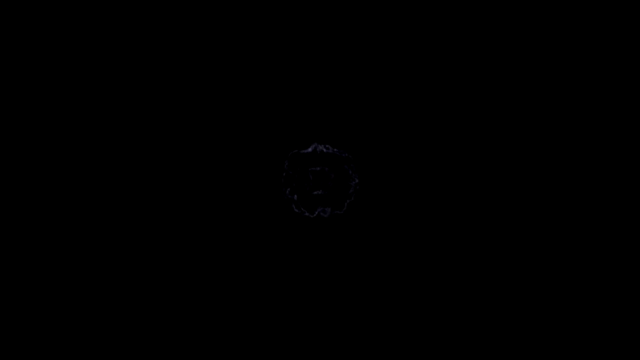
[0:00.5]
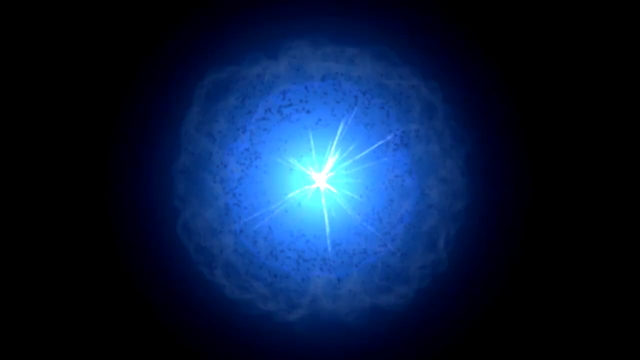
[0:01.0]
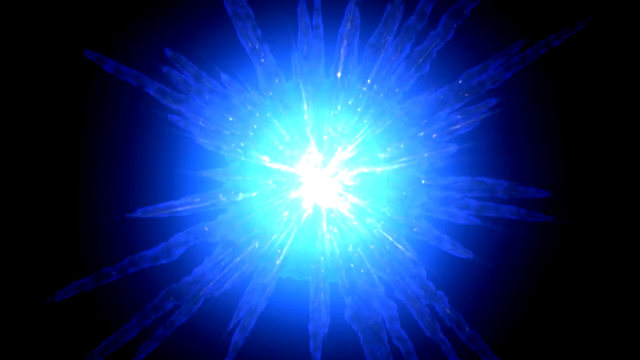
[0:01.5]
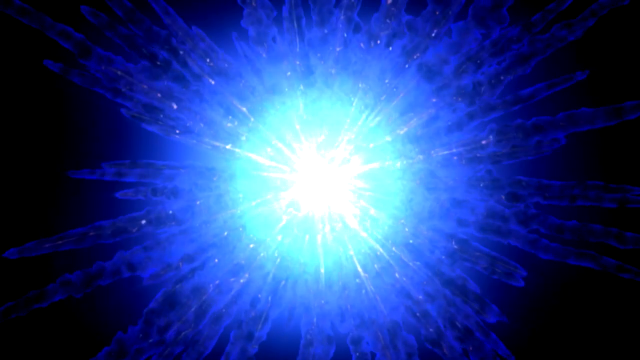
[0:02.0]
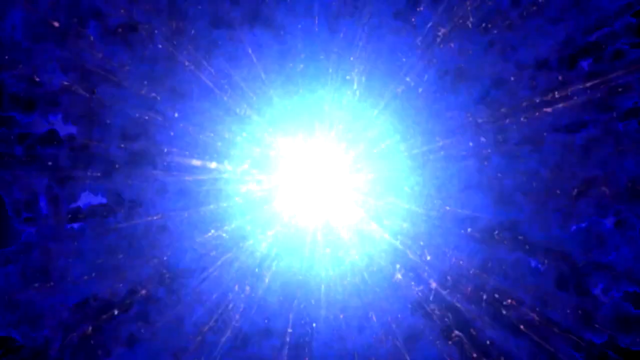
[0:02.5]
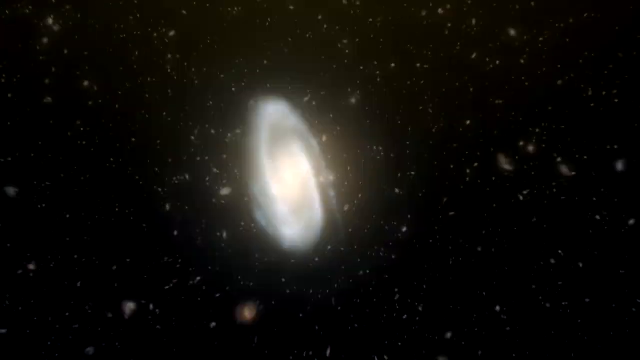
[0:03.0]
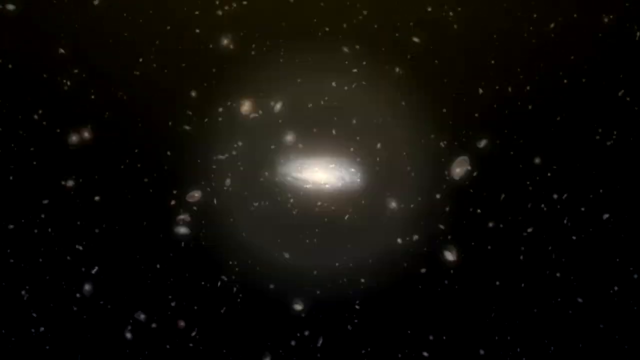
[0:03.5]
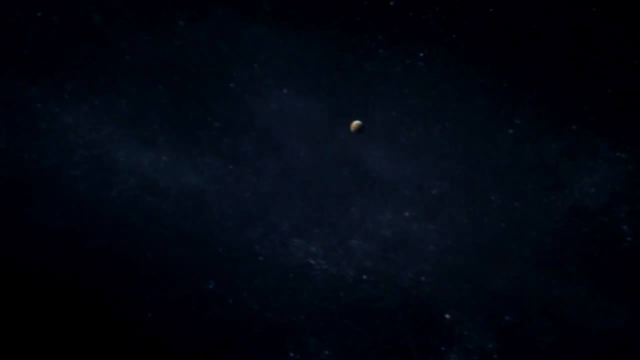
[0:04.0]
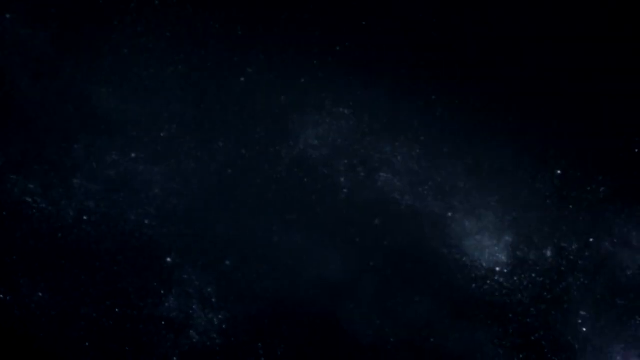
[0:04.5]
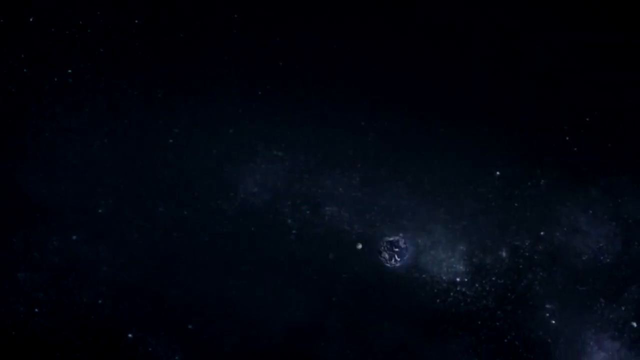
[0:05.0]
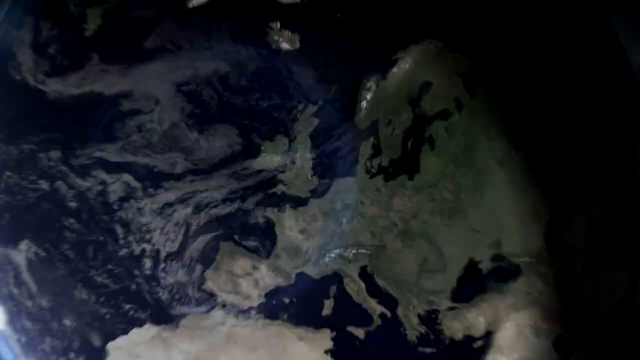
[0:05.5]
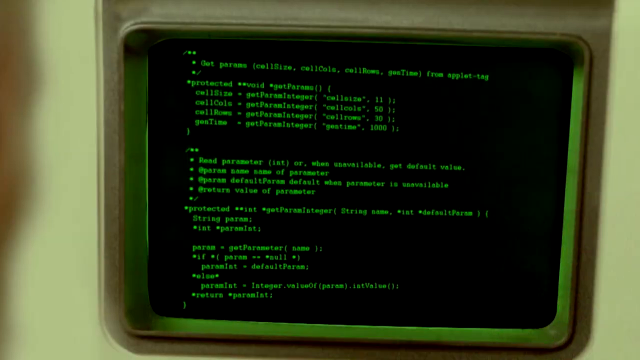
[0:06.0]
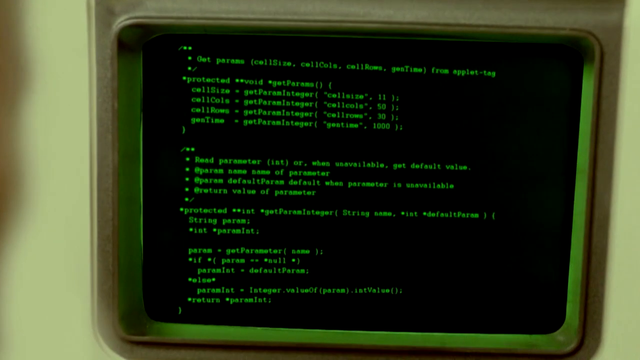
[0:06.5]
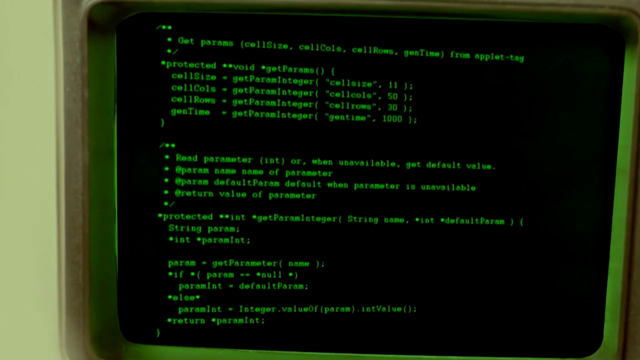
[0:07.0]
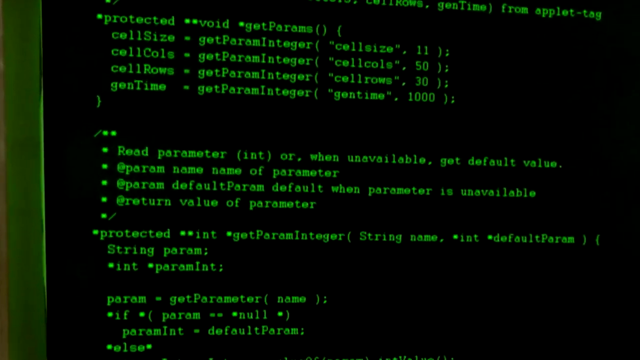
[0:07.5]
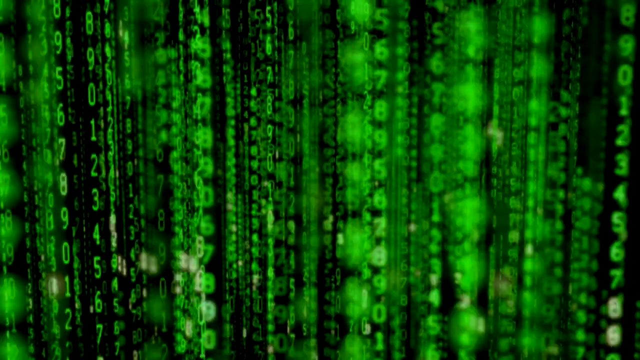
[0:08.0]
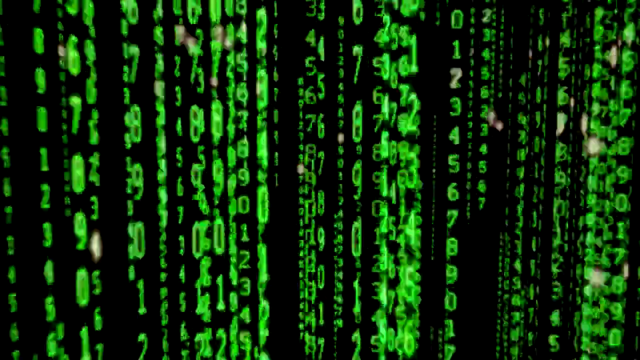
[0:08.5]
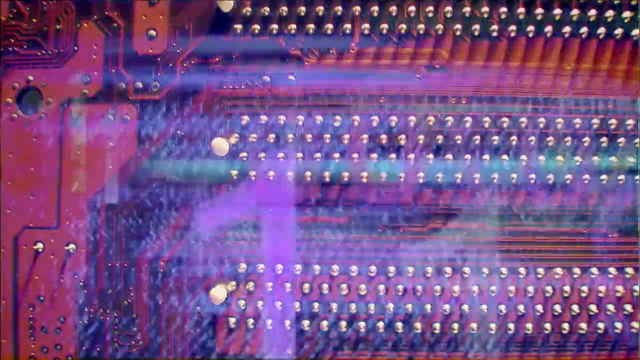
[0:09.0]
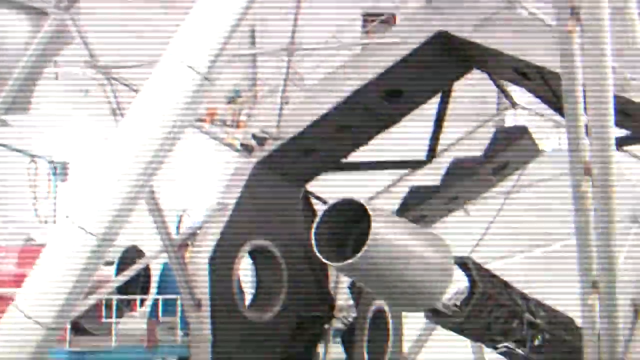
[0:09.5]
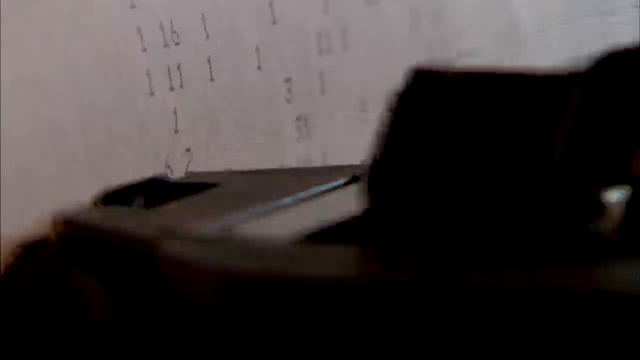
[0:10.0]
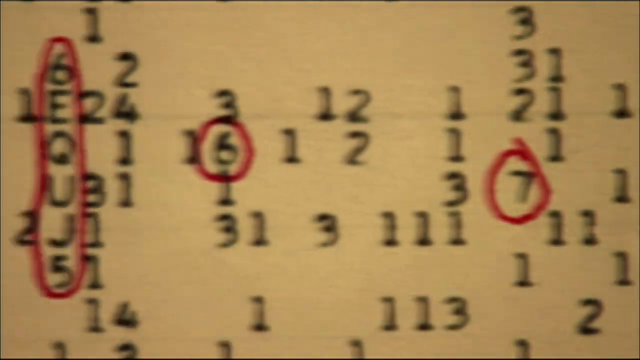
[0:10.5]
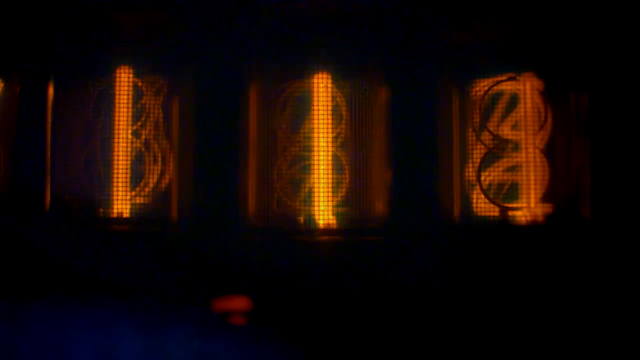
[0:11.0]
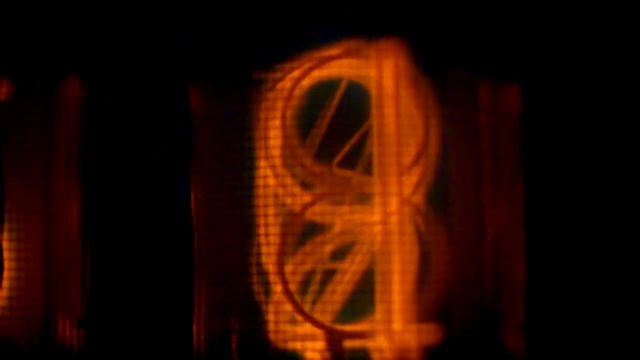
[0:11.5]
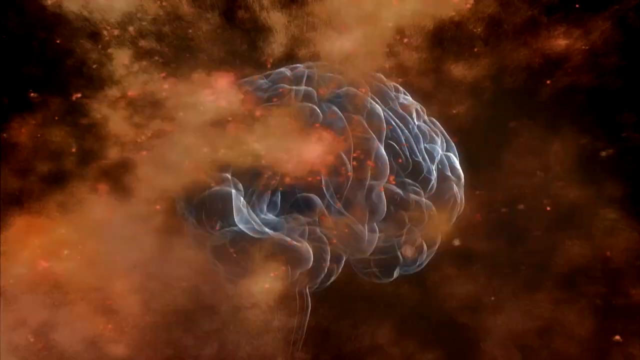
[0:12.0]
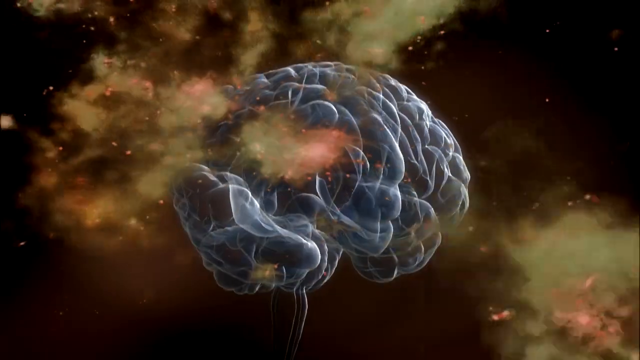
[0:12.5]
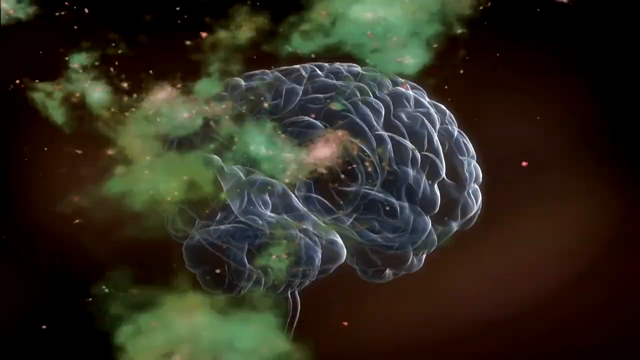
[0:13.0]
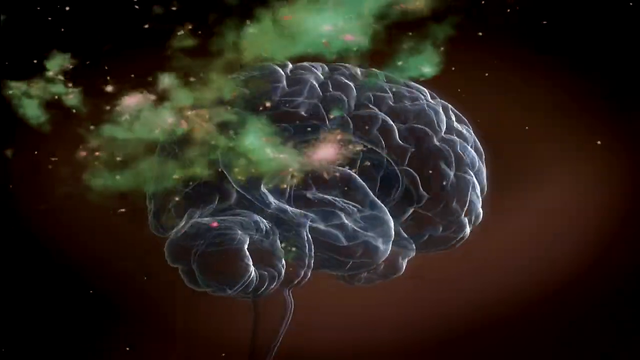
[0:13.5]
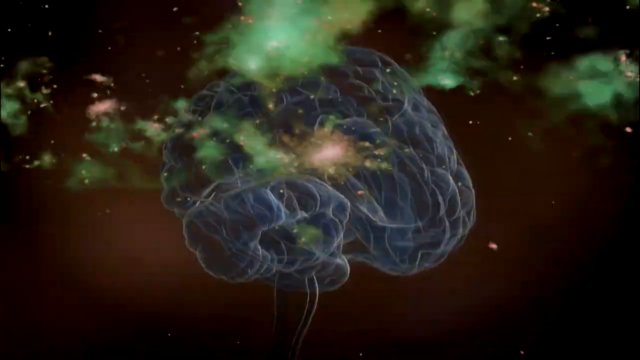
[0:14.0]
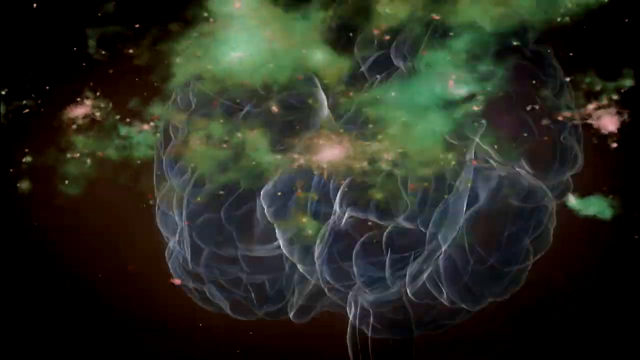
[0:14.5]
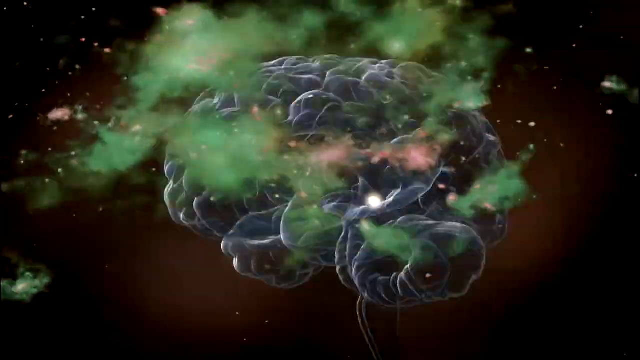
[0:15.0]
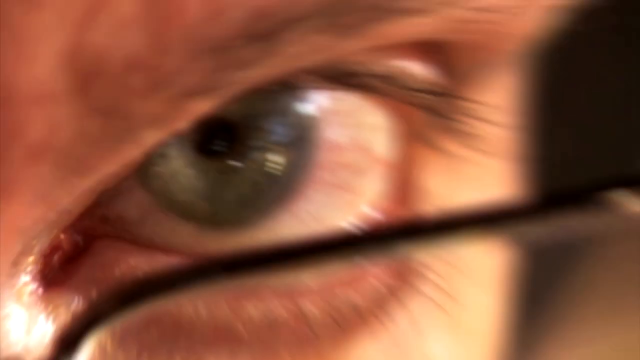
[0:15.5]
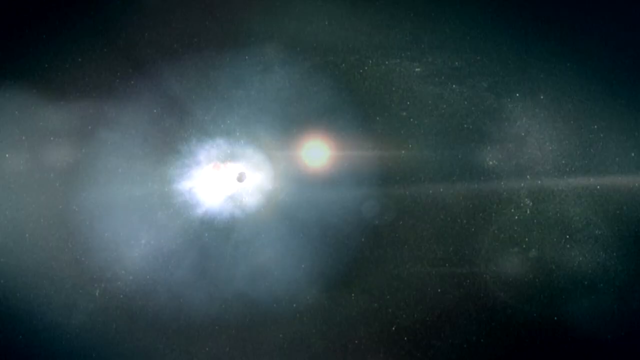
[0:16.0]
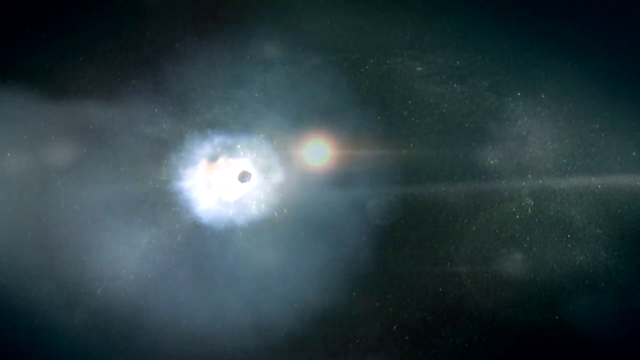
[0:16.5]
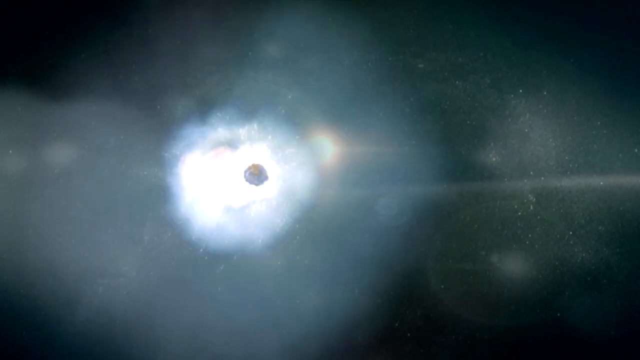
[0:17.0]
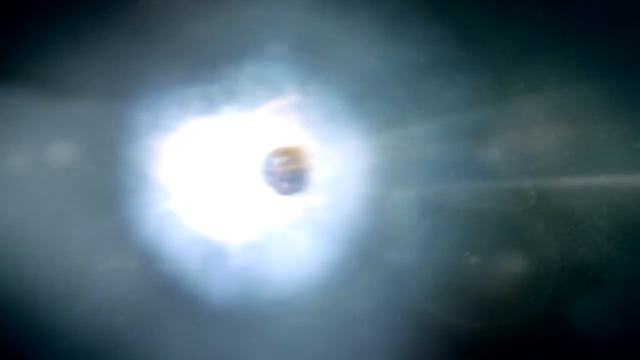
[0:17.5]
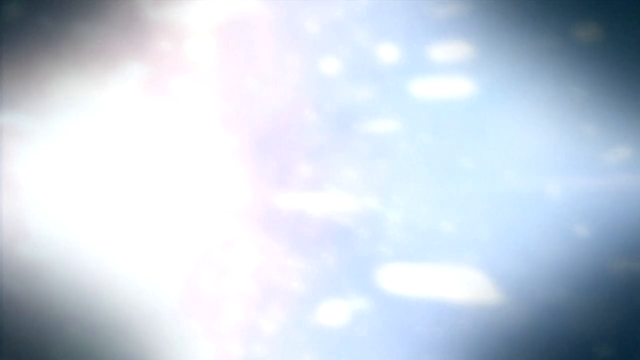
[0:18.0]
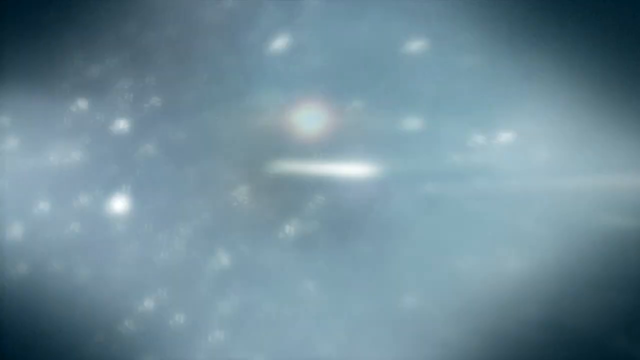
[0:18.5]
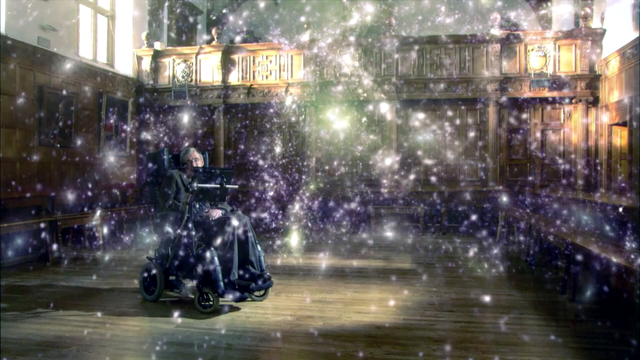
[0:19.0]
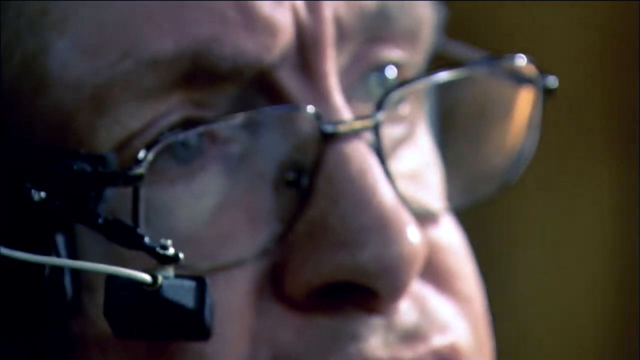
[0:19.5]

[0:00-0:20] A black screen transitions into a highly edited intro, most likely a Big Bang styled explosion, which cuts to a fast transition through multiple different galaxies and planets. The sequence goes deeper into the Milky Way, passing through several planets before zooming in directly on Earth and a geolocation on Earth. It then cuts to a POV shot of an old school computer terminal with a bunch of green lettering on black, then deep into what appears to be binary systems and code, and then to photos of an old style computer board. What appears to be serial numbers are printed onto paper, with rapid transitions showing numbers flickering. A 3D rendered graphic of a brain enveloped in a cloud appears on screen, followed by a close-up of a man wearing glasses and then an asteroid hurling through space. The sequence ends with a shot of Stephen Hawking sitting with the universe overlaid on his glasses.